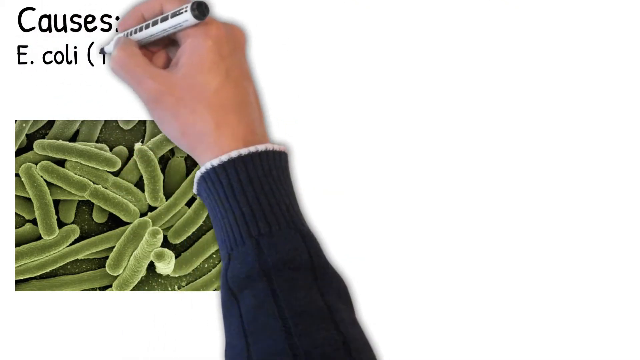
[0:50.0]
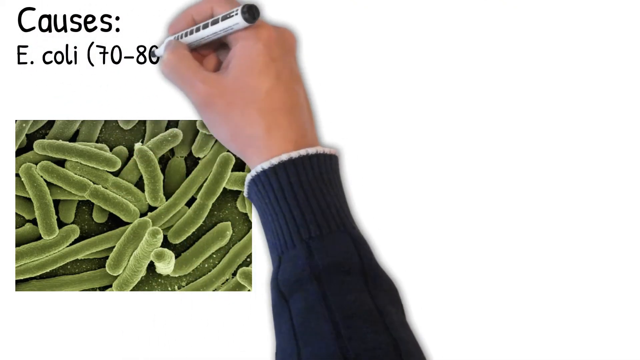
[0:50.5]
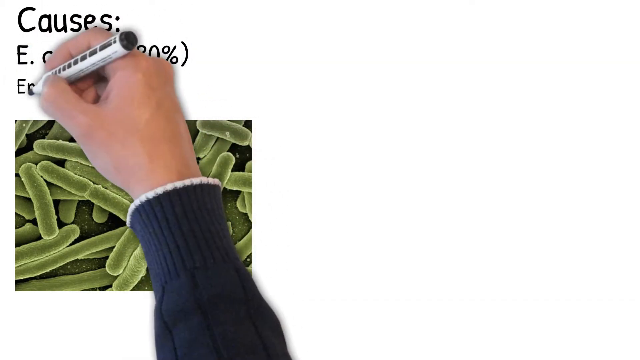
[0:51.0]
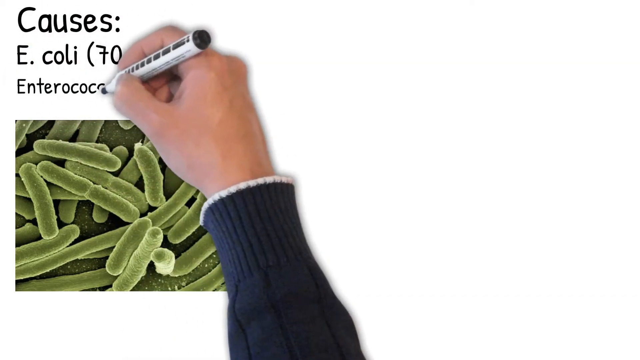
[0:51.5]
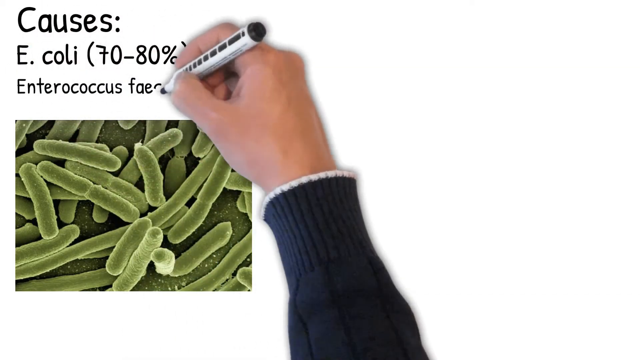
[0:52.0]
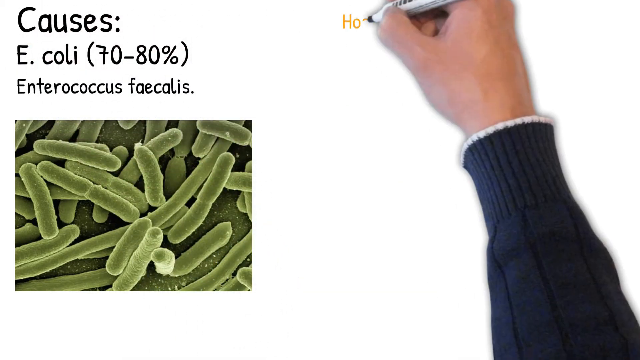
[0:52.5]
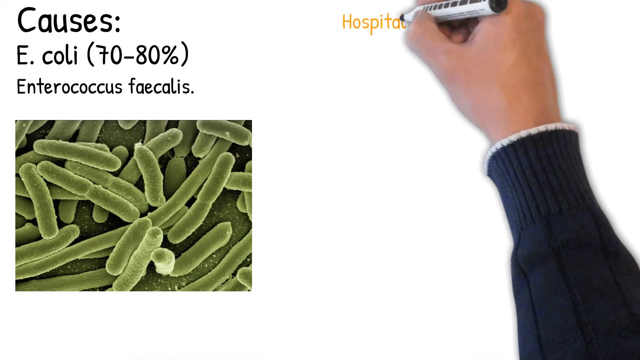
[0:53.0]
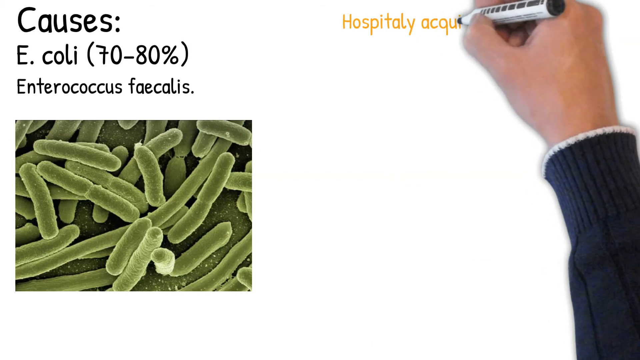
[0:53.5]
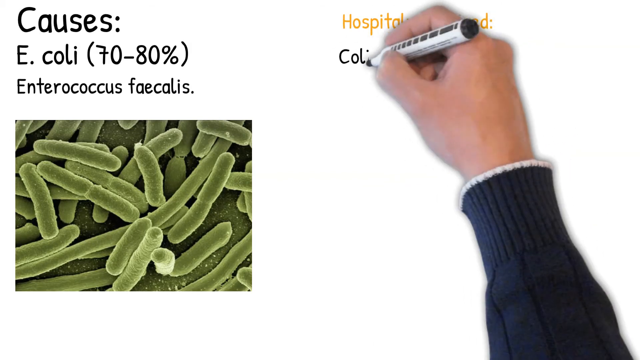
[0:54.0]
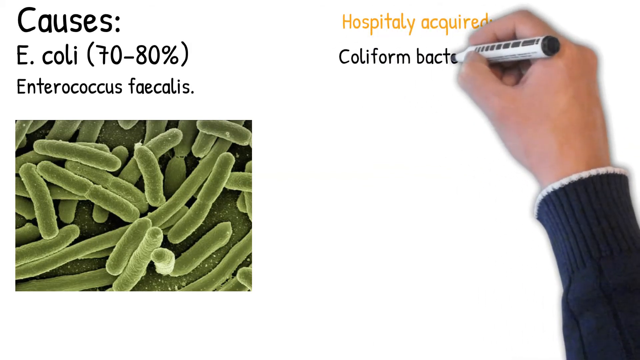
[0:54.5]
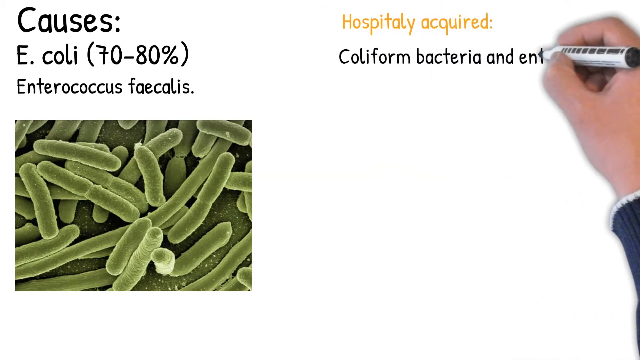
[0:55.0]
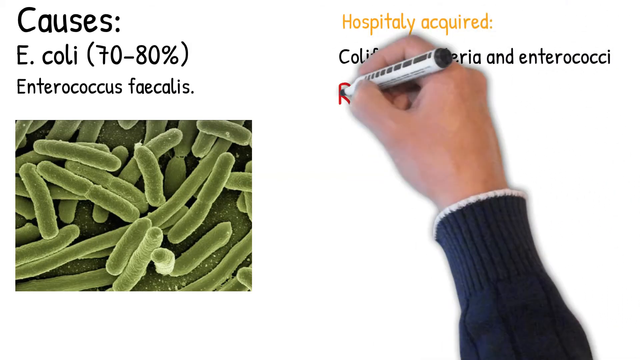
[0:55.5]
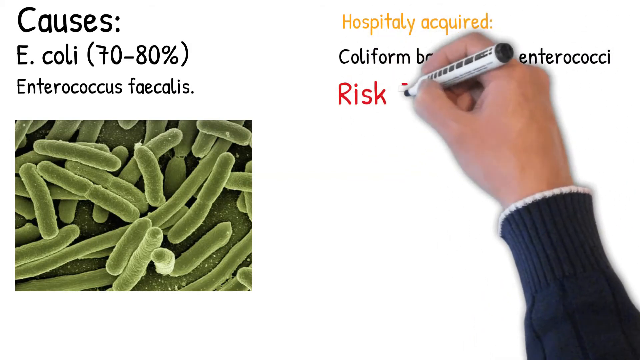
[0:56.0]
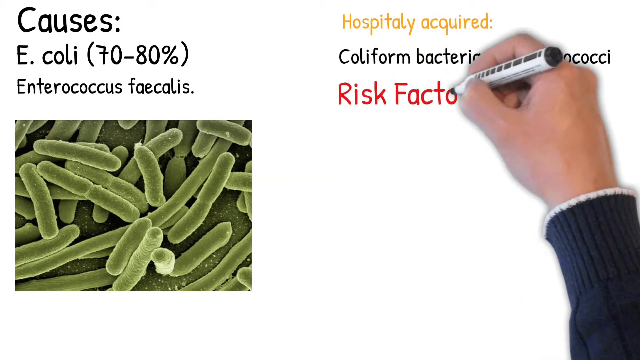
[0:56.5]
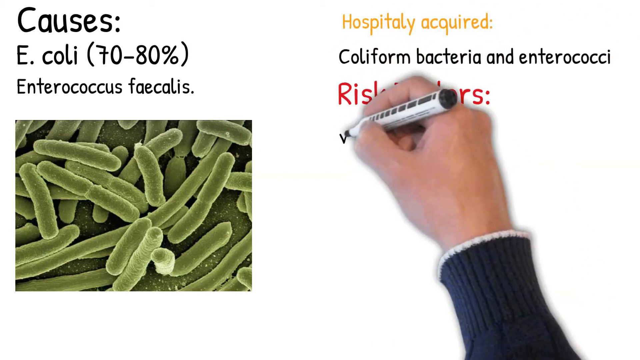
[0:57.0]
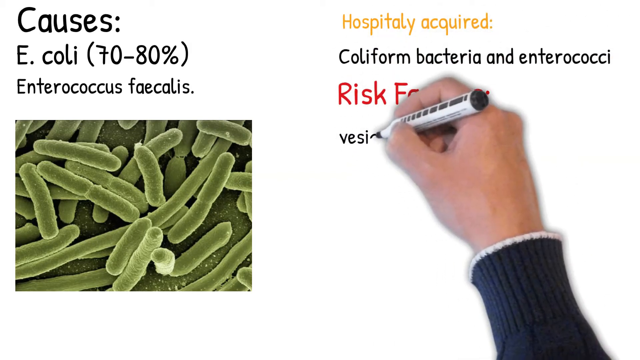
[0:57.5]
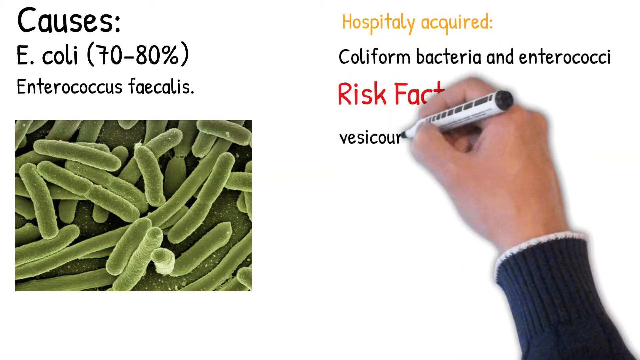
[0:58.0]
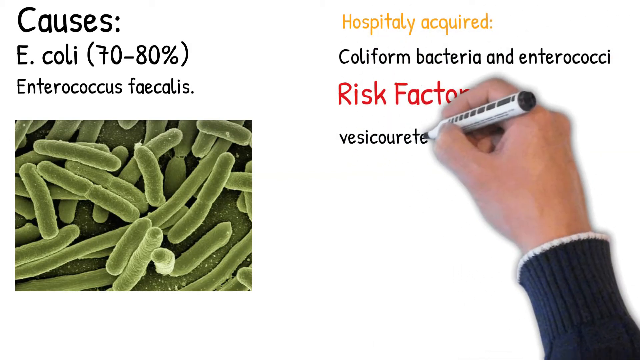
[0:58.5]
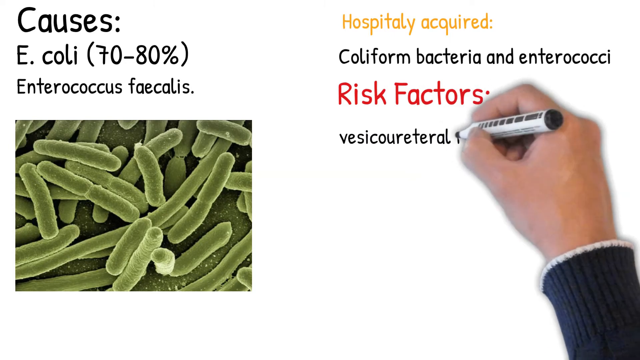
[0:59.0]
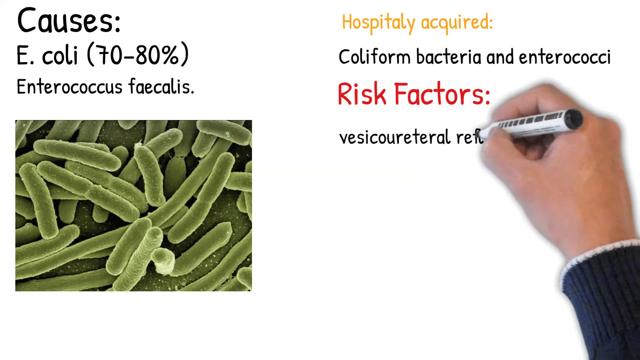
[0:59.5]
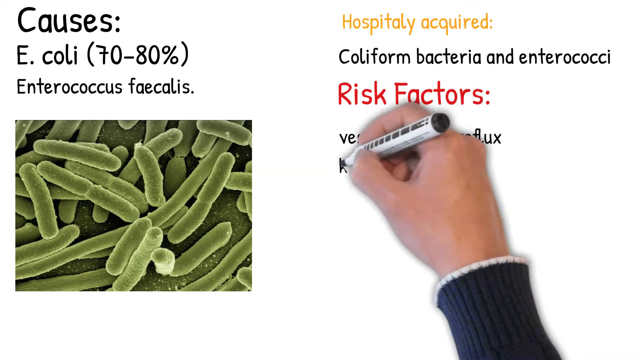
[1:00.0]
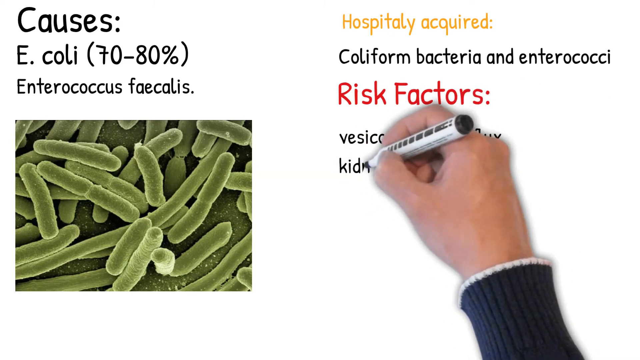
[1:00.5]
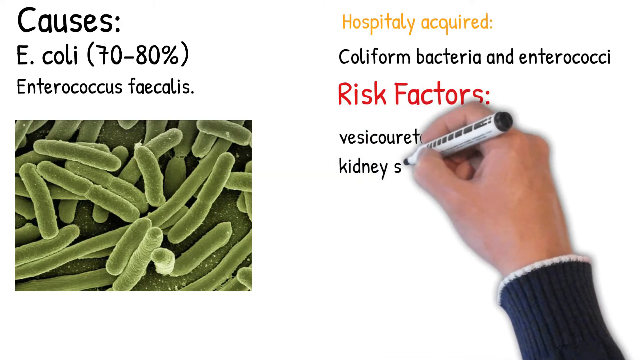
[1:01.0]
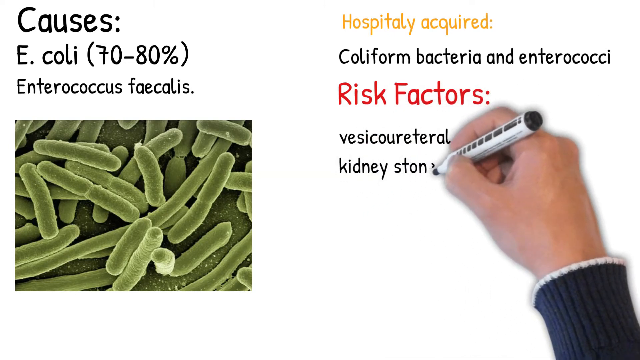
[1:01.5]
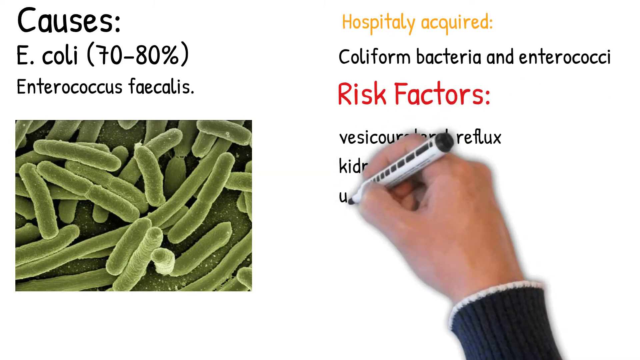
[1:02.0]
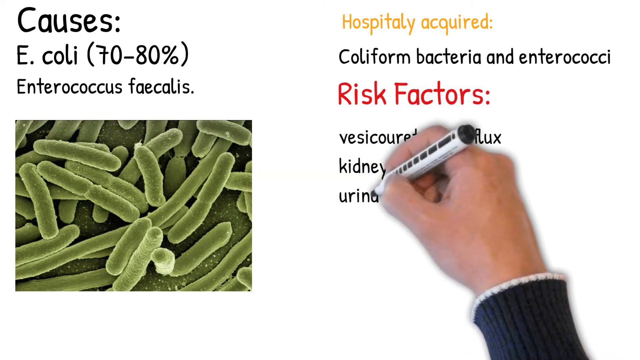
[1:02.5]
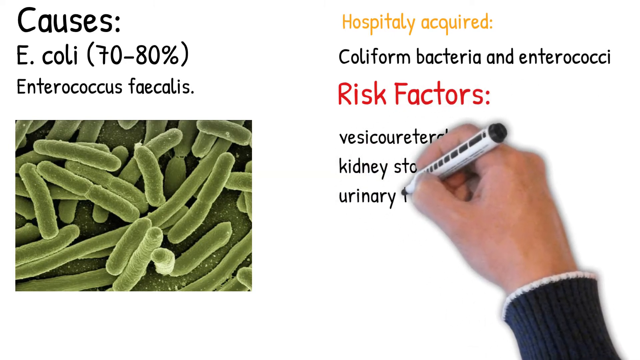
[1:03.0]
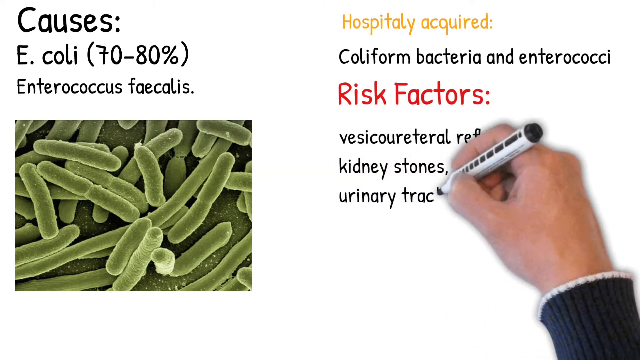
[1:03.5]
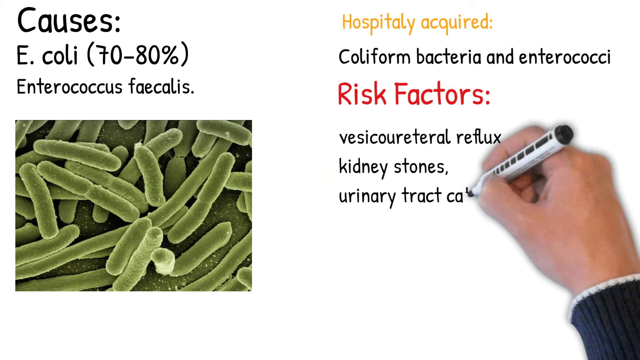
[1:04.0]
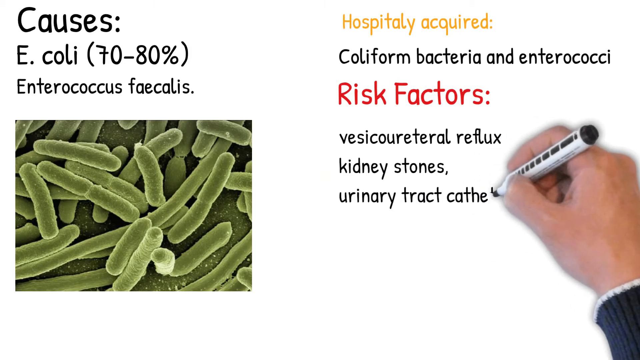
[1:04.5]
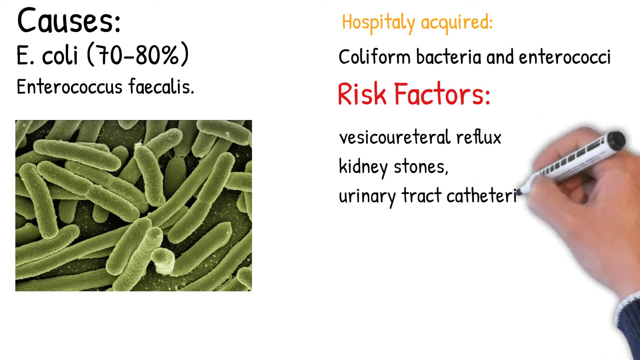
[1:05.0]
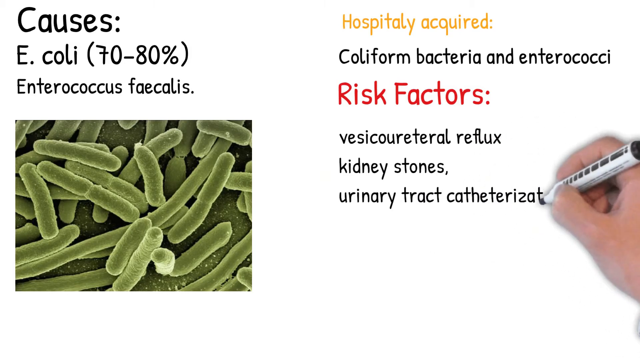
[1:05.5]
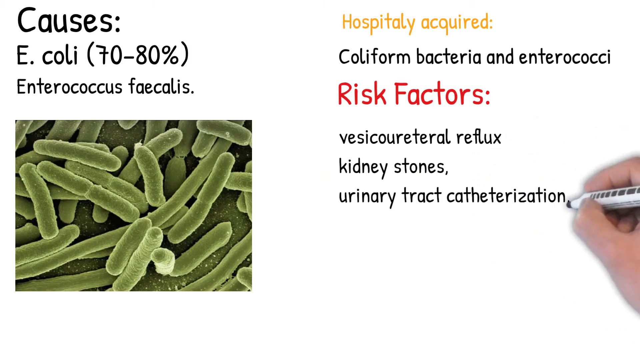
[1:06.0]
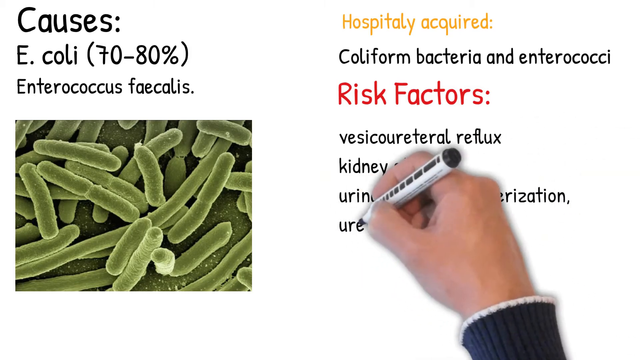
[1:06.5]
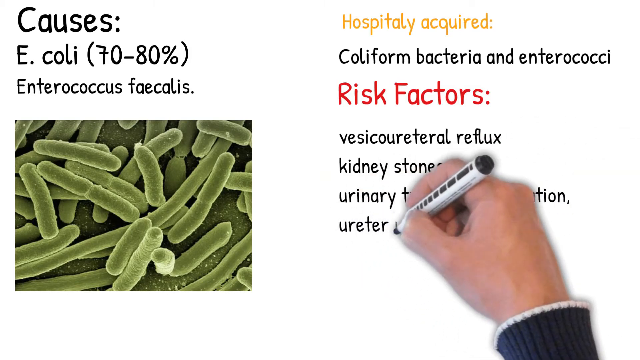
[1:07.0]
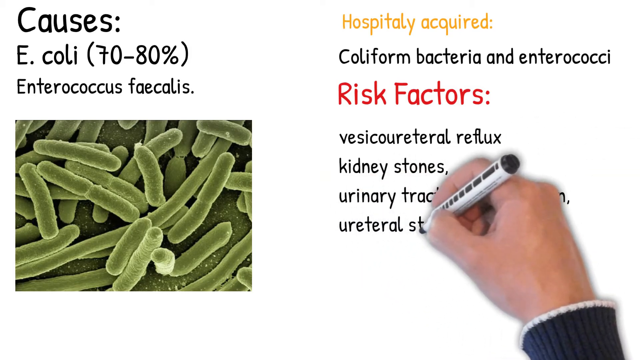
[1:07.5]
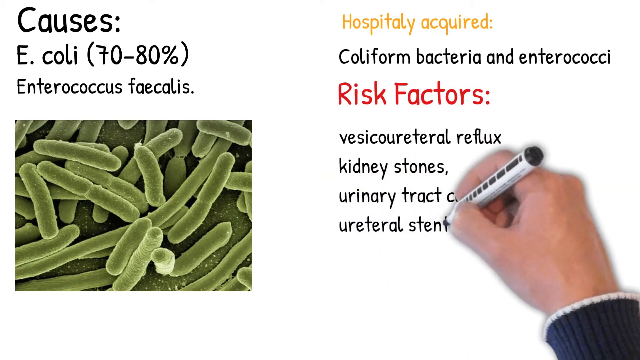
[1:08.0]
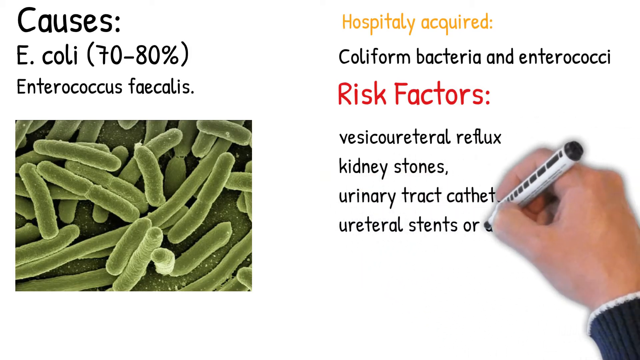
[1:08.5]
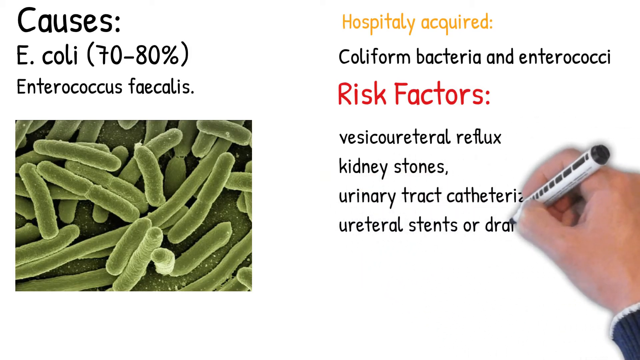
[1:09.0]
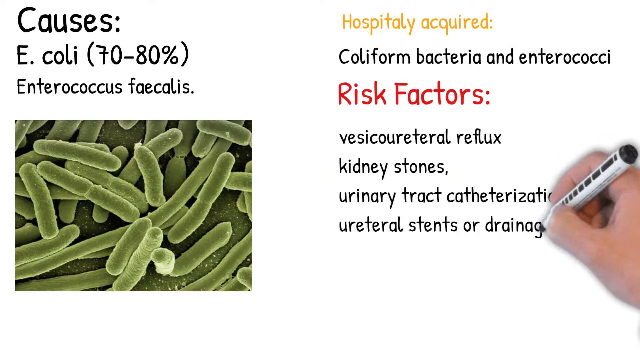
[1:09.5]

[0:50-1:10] A picture of bacteria is shown, and the man's hand writes "causes E. coli" above it, followed by "70 to 80 percent" and "enterococcus". He continues writing "hospitality acquired", "coliform bacteria and enterococci", and "risk factors", followed by "reflux", "kidney stones", "urinary tract catheterization" and "Ureteral stents or drainage". His arm appears to have a dark navy blue sweater on, and he uses a white pen with black writing on its side. "Hospitality acquired" is in yellow, other words are in black, and "risk factors" is written in red.